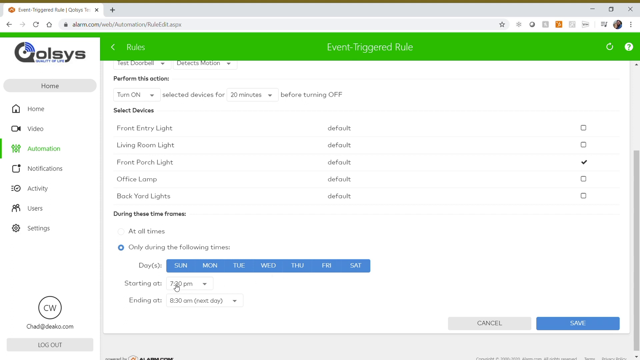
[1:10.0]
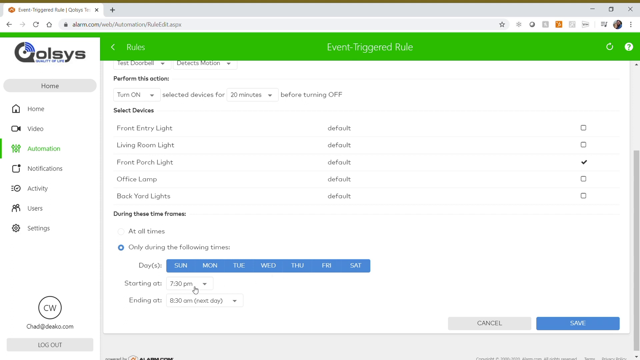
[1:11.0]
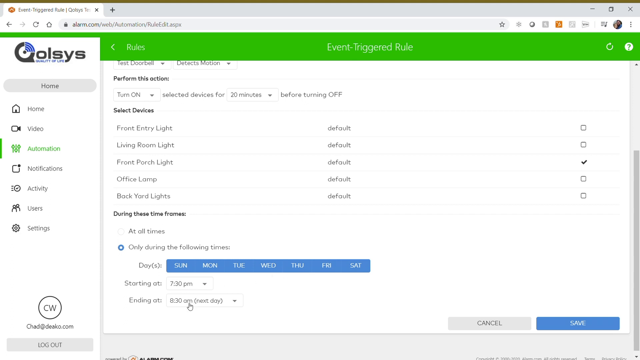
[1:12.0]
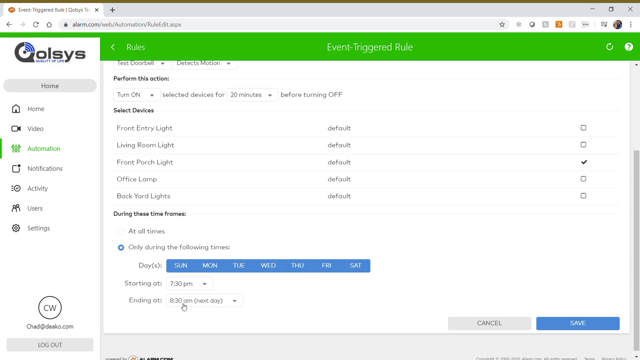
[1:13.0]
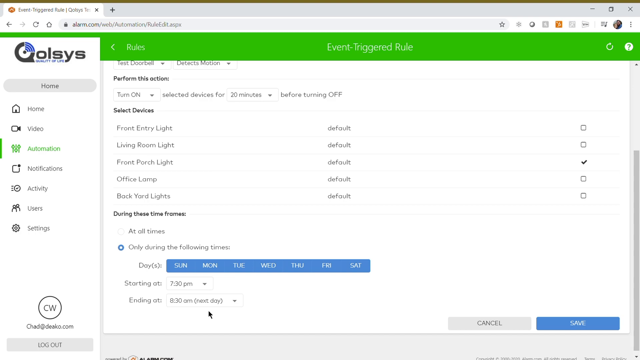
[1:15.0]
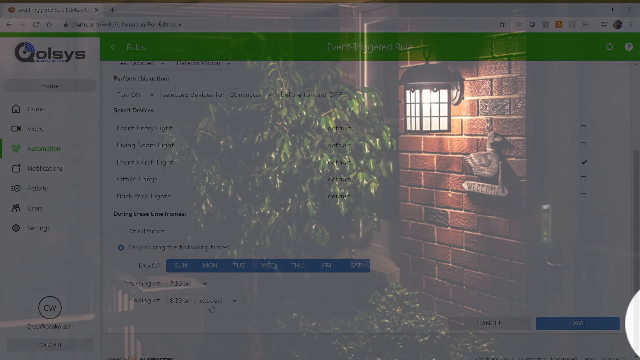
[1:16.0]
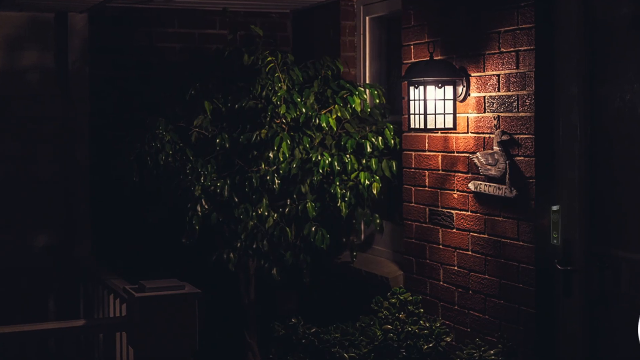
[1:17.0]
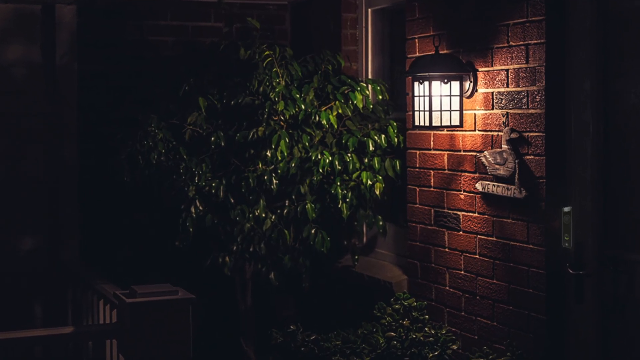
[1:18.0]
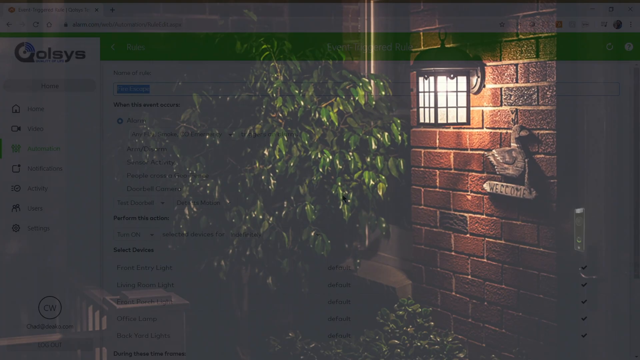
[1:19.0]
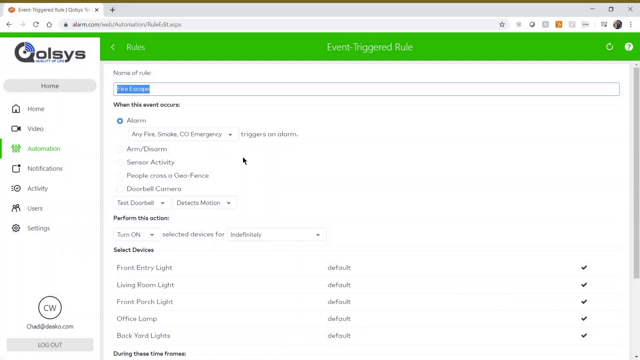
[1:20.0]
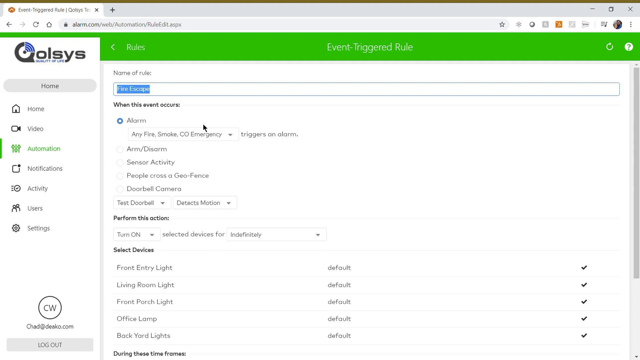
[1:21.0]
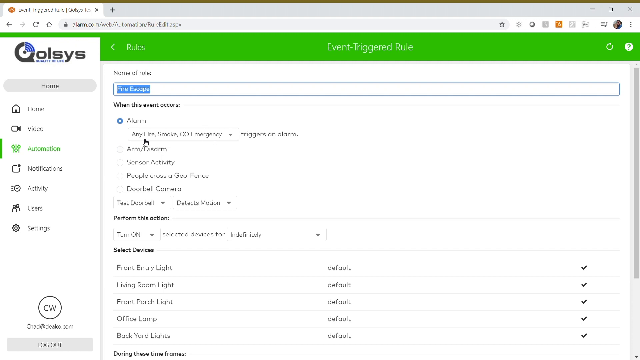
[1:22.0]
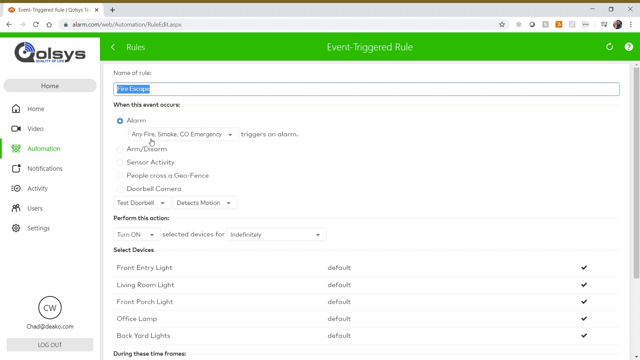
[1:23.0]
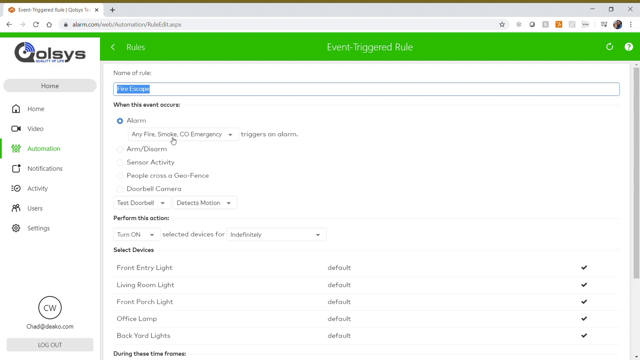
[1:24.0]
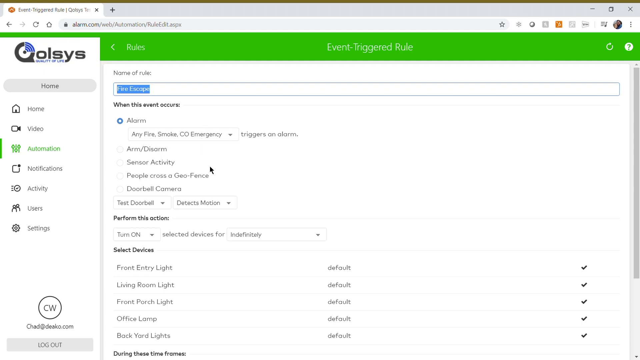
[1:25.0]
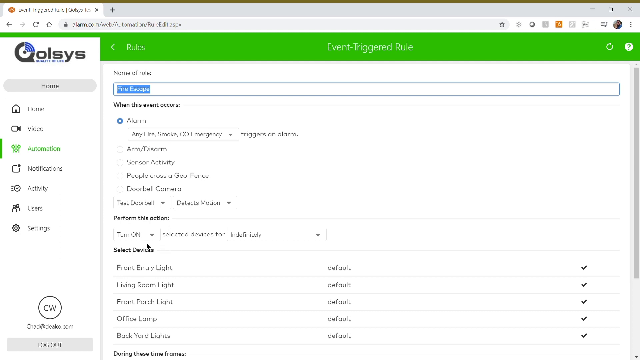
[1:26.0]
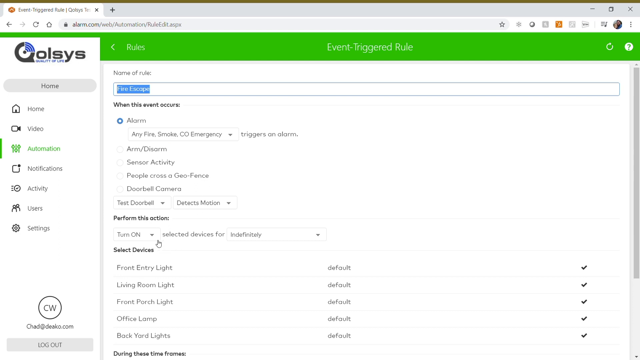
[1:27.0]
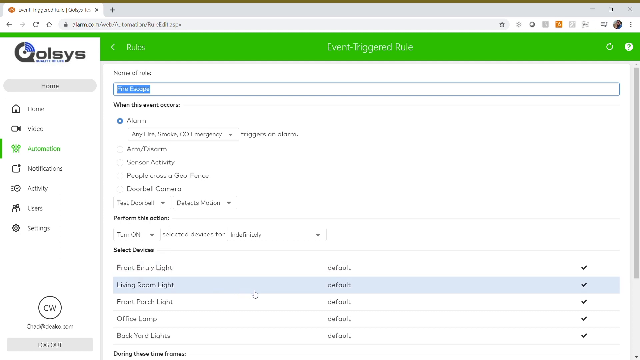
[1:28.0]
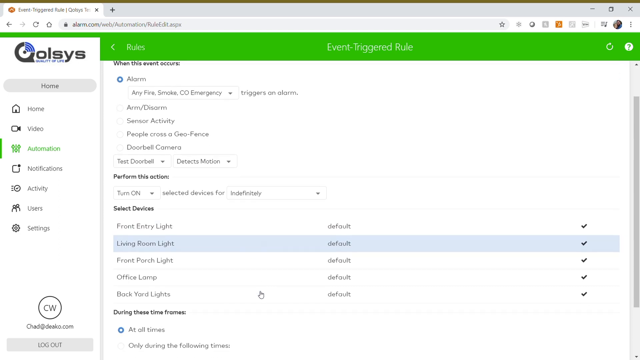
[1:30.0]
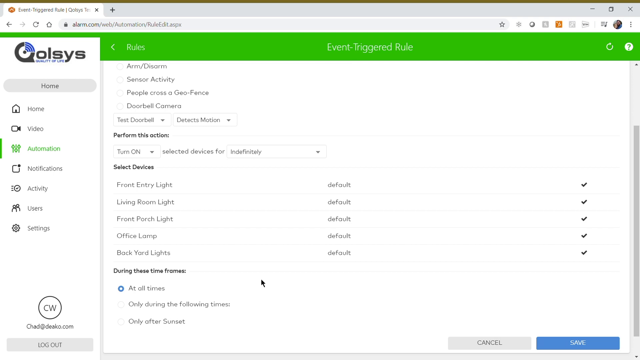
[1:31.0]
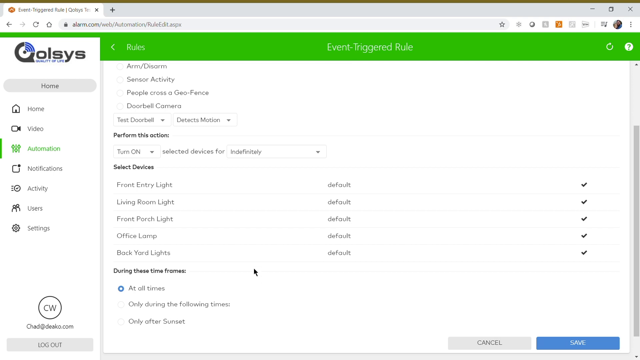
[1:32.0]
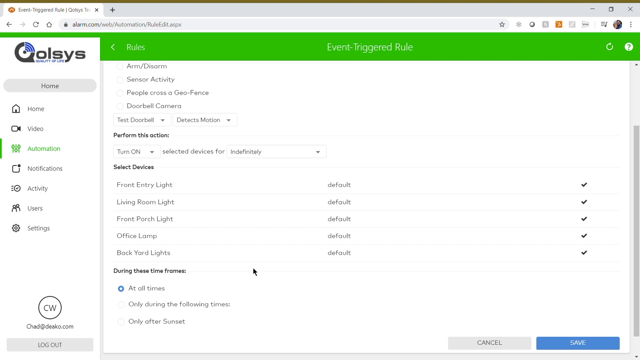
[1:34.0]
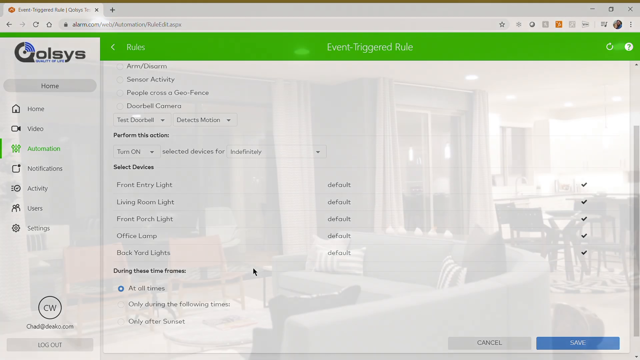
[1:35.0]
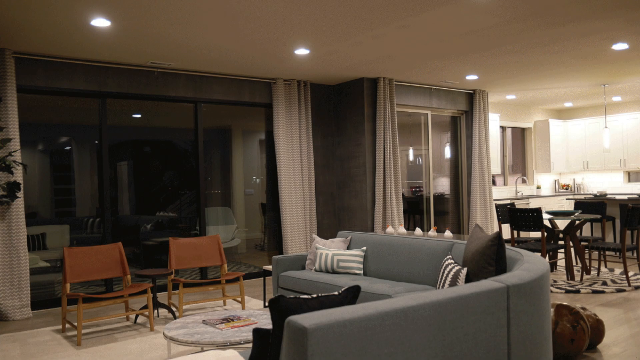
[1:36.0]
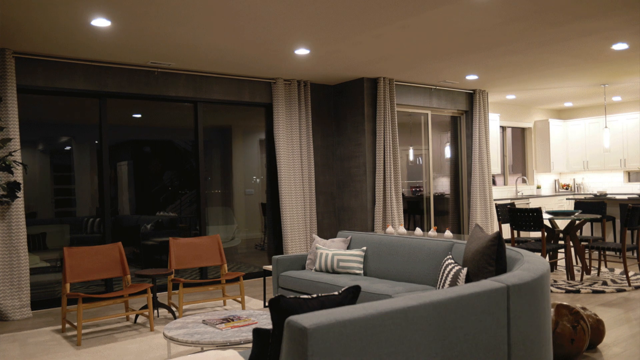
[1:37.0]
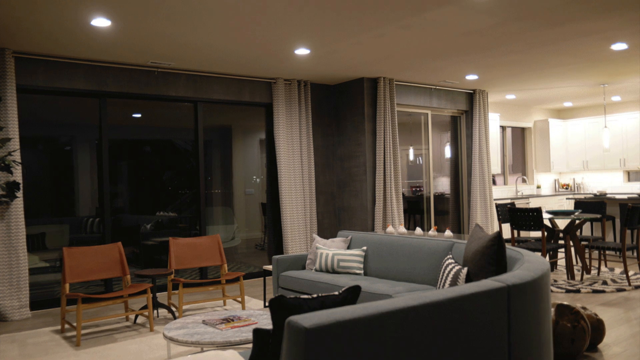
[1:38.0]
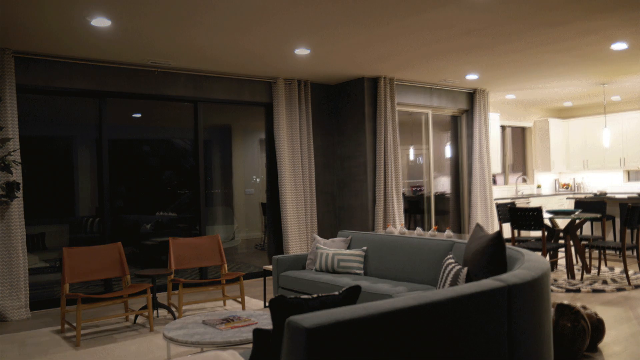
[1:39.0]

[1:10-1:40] The video is slightly wider than it is tall and starts on someone's desktop, in Google Chrome, on a web-based management interface for a device. In the upper left, apparently the name of the device, it says "QOLSYS". Below that is the navigation in the left panel: home with a house icon, video with a camera, automation, which is highlighted in green and appears to be the current page, notifications as a black circle, activity as a circle, users as two silhouettes of people, and settings as a gear. To the right at the top it says "event triggered rule" with a green banner behind it. This seems to fade out to the outside of a brick house, where the porch light on the right-hand side is on, illuminating the bricks around it, and there is a bush in the very center. The view keeps zooming in on it. It then returns to the interface, where the user appears to be arrowing over the "any fire, smoke, co-emergency" dropdown menu, which is under "alarm", under "when this event occurs". The user then goes down to the "perform this action" section.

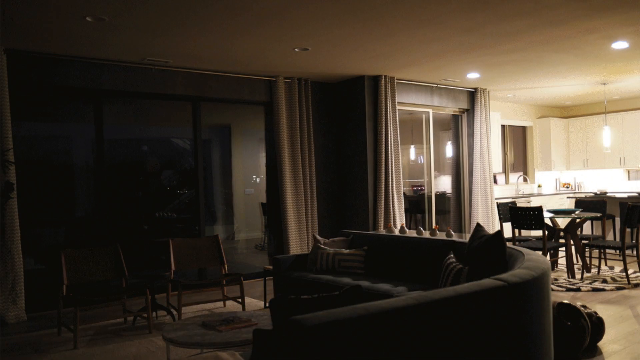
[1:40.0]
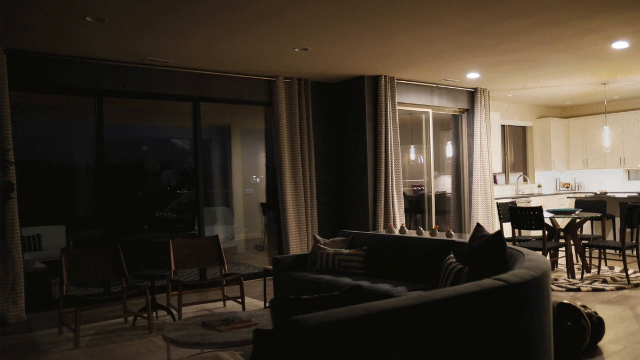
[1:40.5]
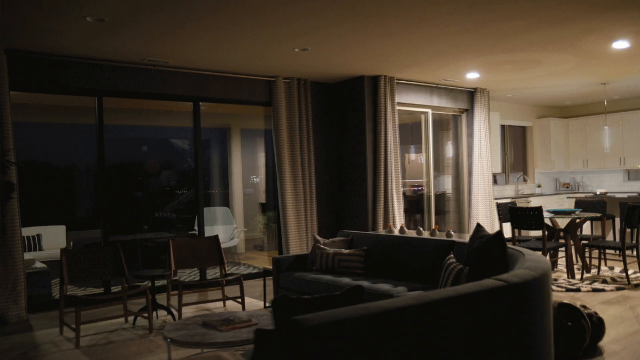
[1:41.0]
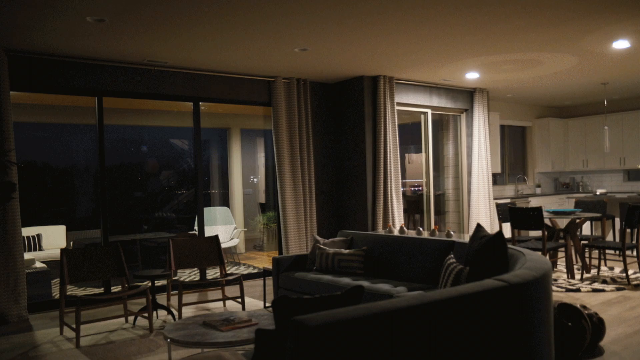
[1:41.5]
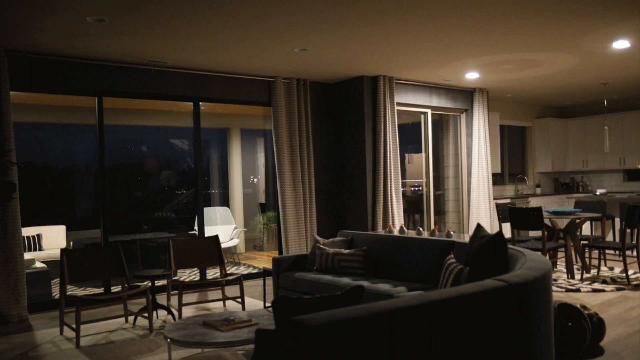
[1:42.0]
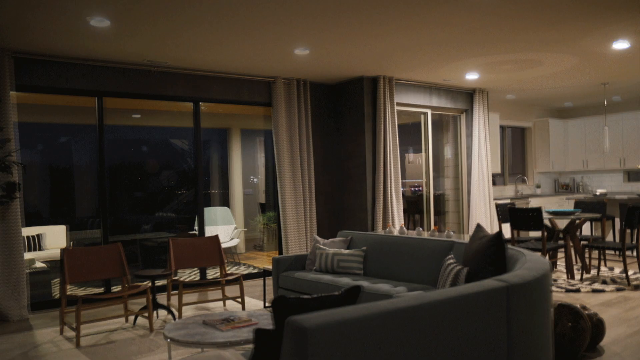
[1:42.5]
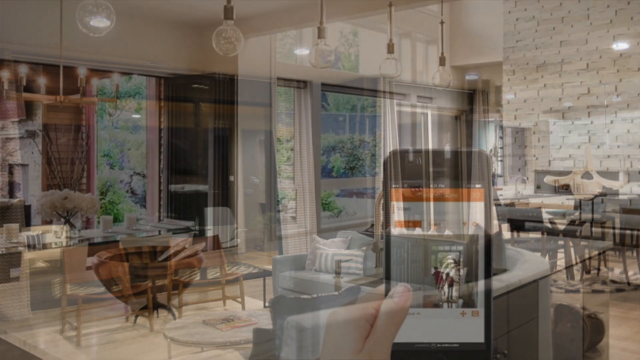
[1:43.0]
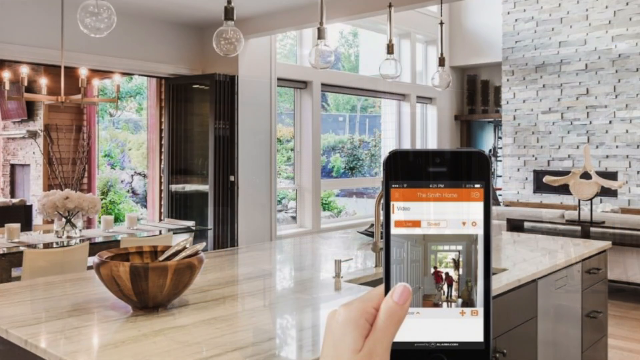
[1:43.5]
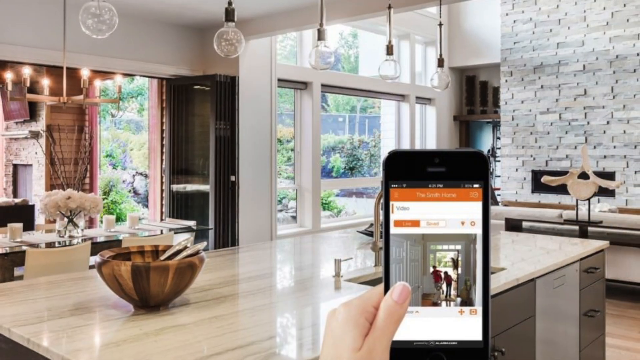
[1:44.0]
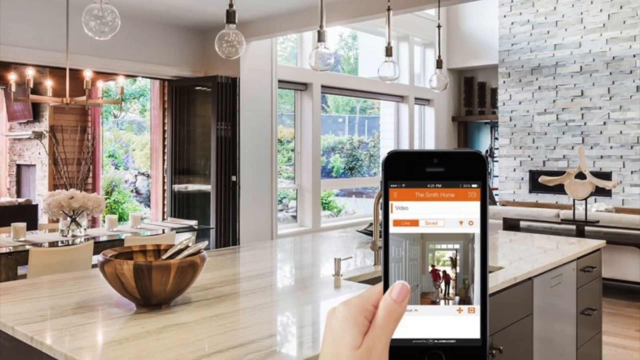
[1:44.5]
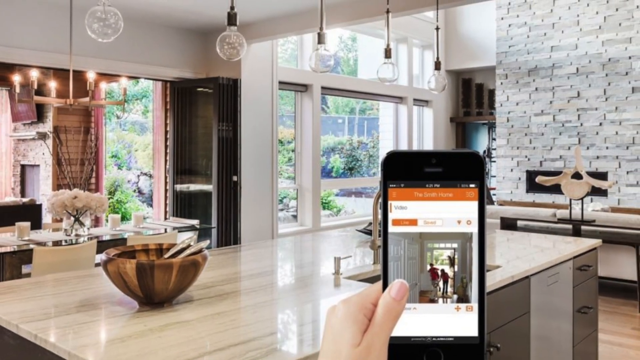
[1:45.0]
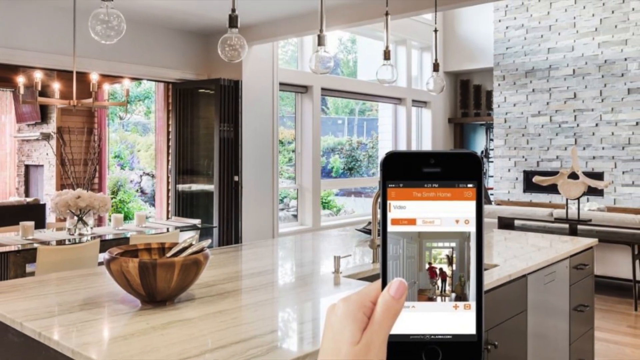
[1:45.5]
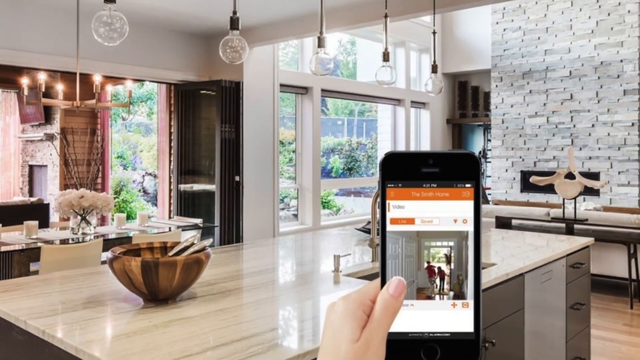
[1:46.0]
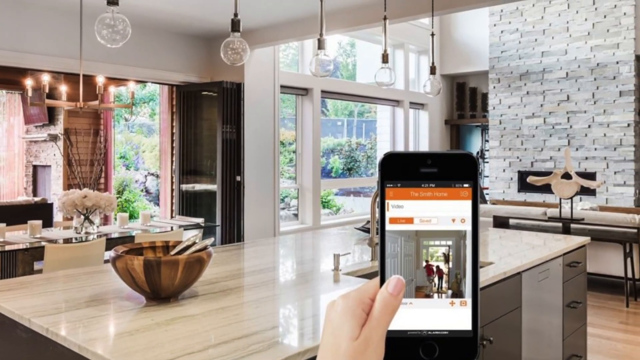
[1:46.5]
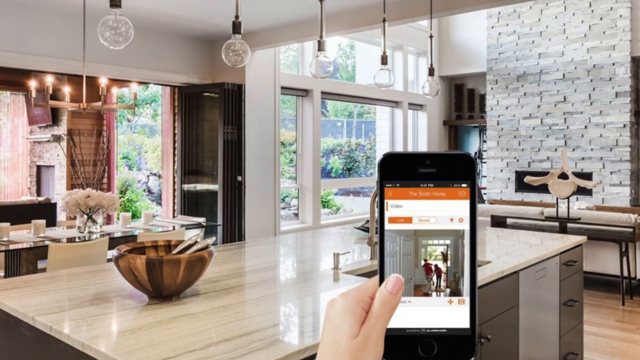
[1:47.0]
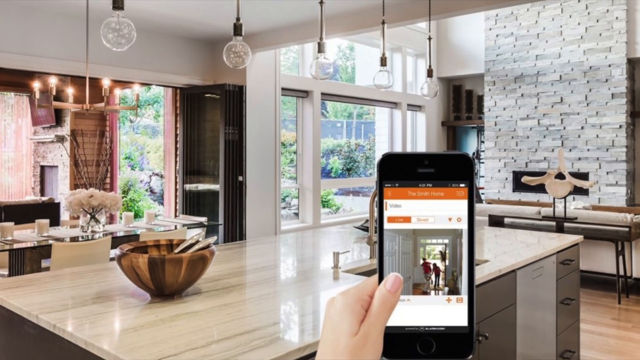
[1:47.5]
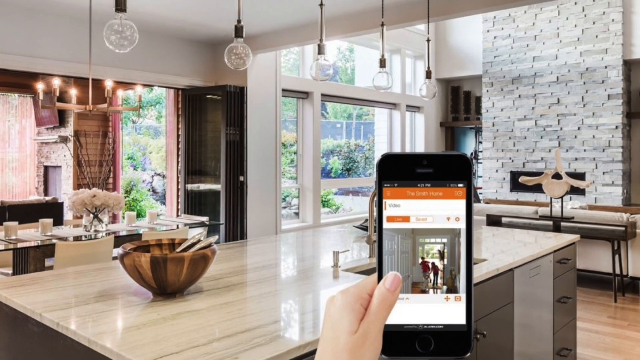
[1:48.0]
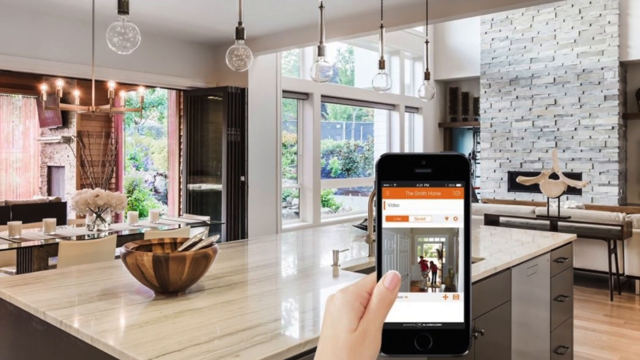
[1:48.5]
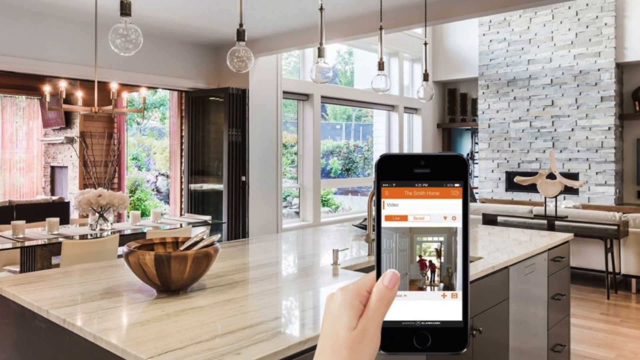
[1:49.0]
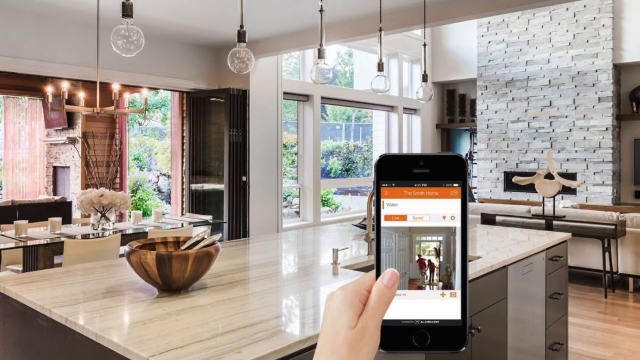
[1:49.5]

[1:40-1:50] The video is slightly wider than it is tall and shows the inside of a room that looks like a combined living room and kitchen. It is very dimly lit, with two lights on the right above what appears to be the kitchen table and none on the left side, where the living room is. The image starts fading out as the lights come on at the left above the living room area, and a new scene shows a well-lit kitchen area. The perspective is from behind the island in the center, and what looks like a left hand comes up just right of center holding a phone, possibly controlling the devices with it. The room has the usual things; the island in the center is light brown and has a brown bowl on its left-hand side.